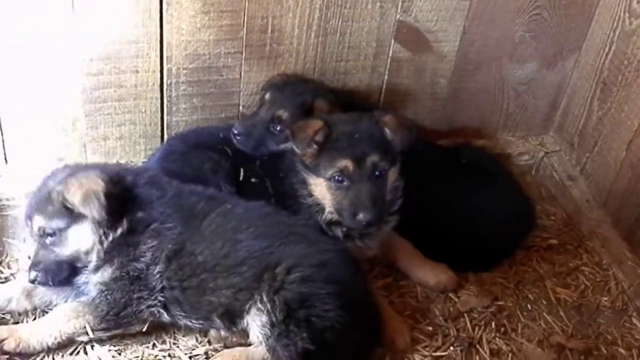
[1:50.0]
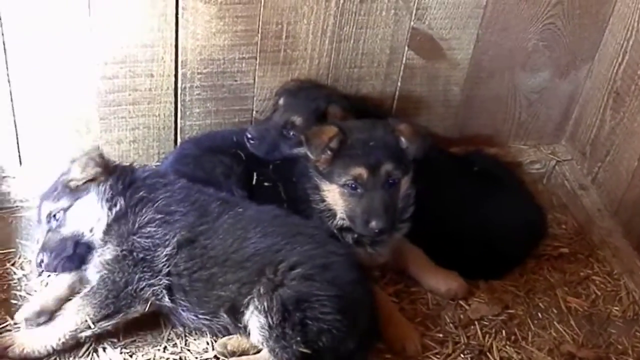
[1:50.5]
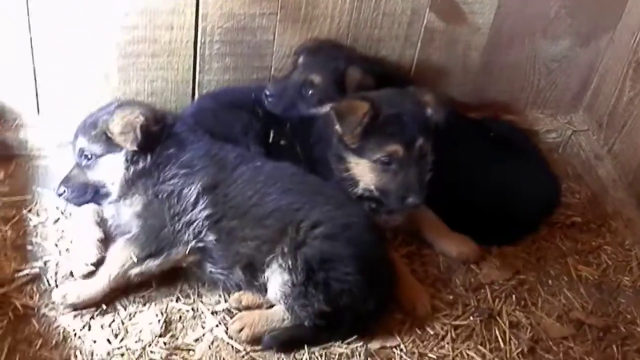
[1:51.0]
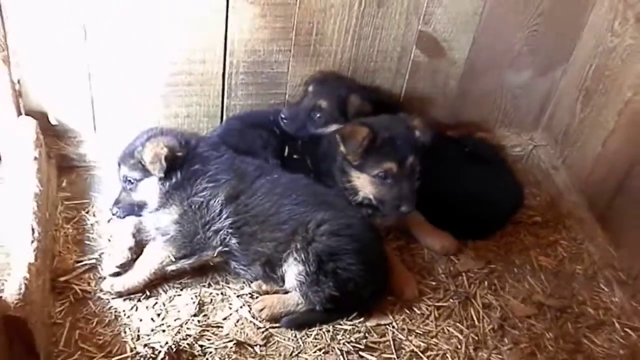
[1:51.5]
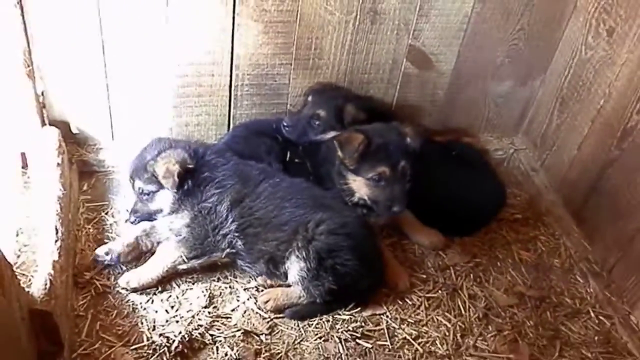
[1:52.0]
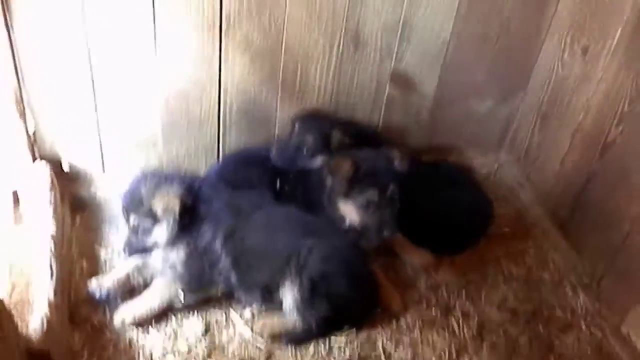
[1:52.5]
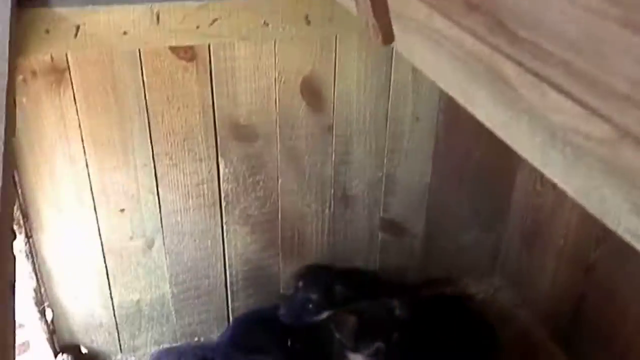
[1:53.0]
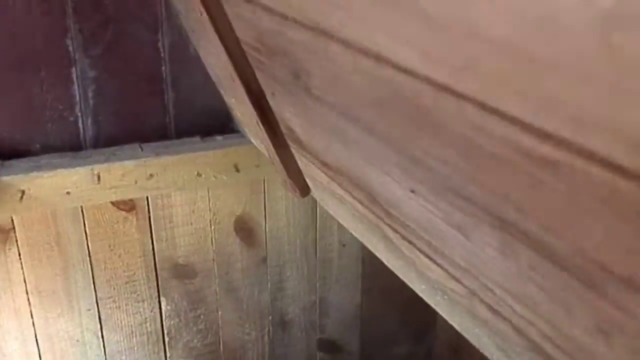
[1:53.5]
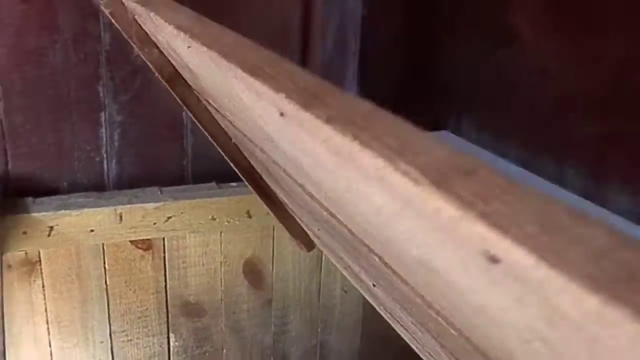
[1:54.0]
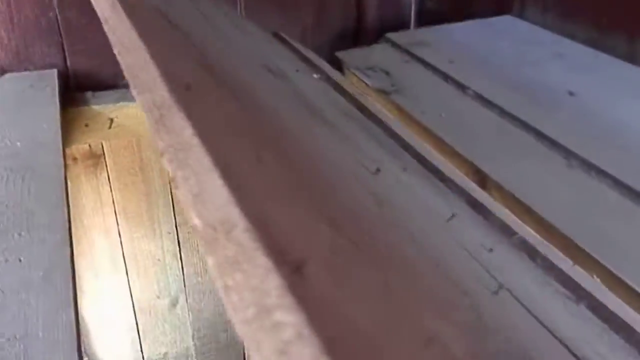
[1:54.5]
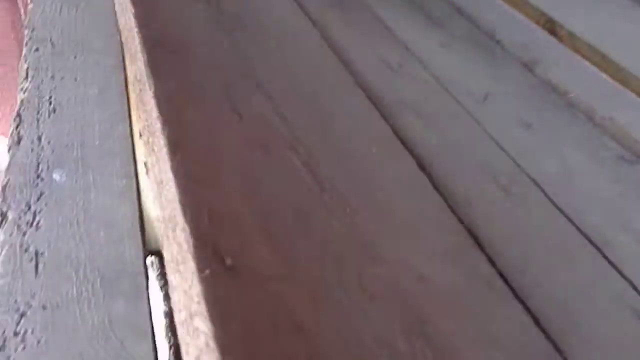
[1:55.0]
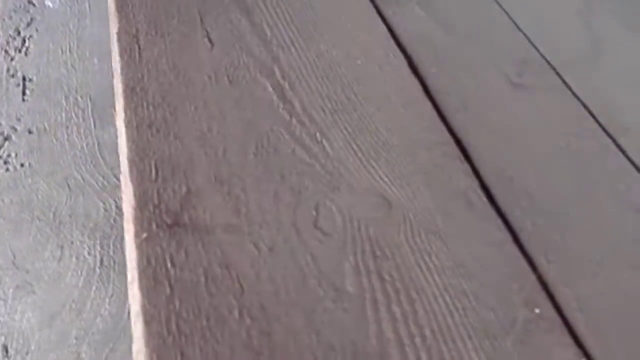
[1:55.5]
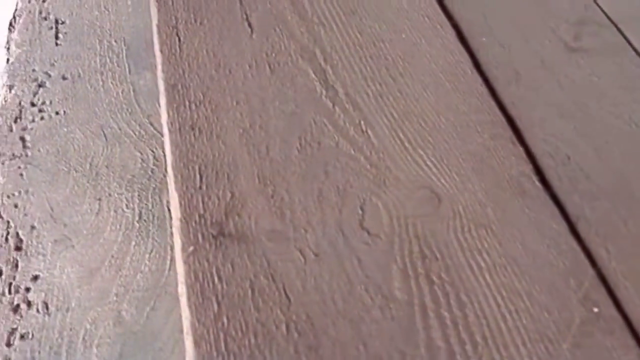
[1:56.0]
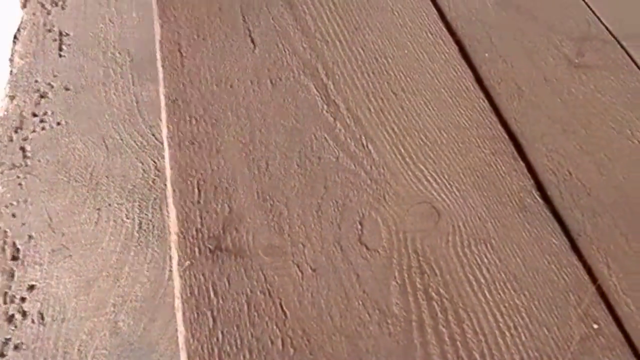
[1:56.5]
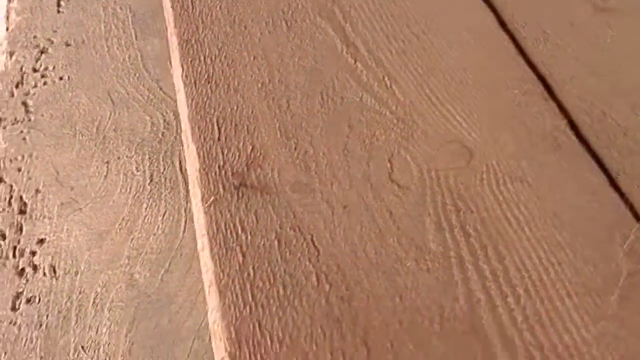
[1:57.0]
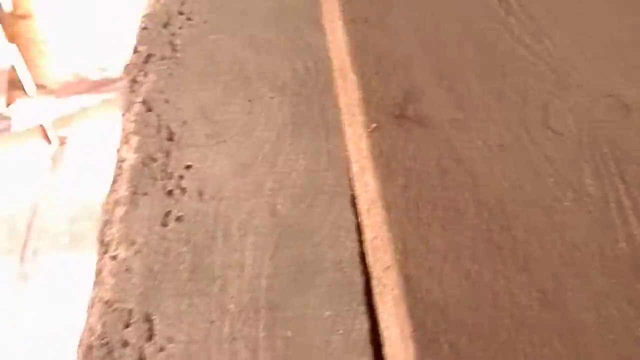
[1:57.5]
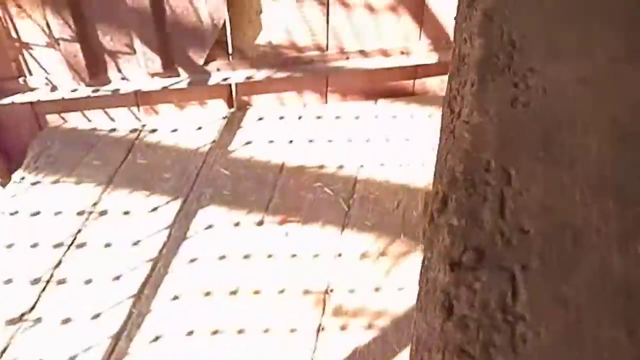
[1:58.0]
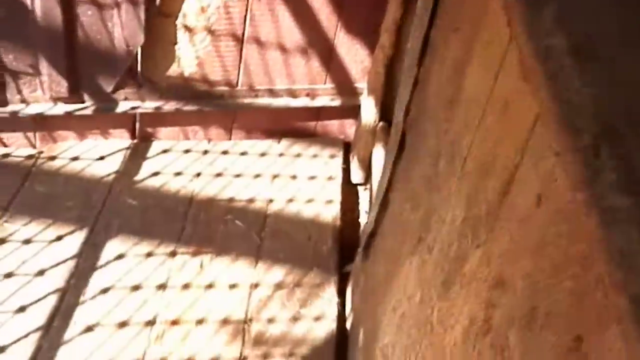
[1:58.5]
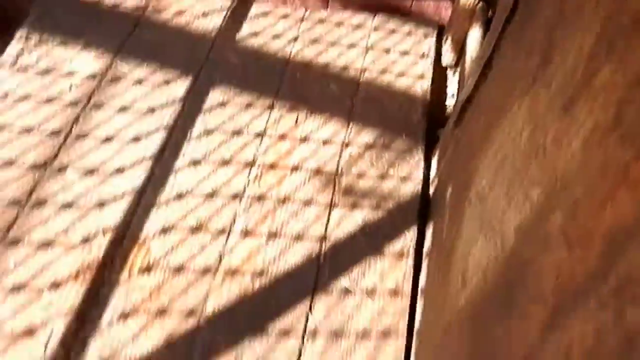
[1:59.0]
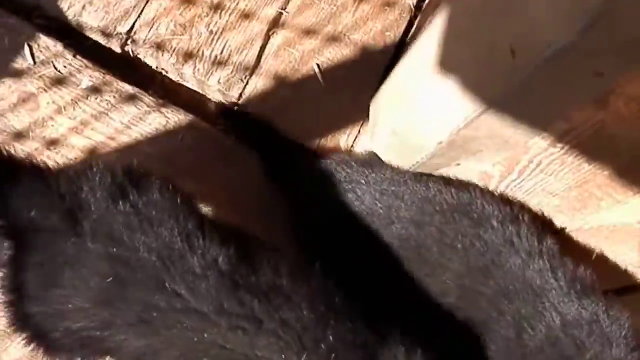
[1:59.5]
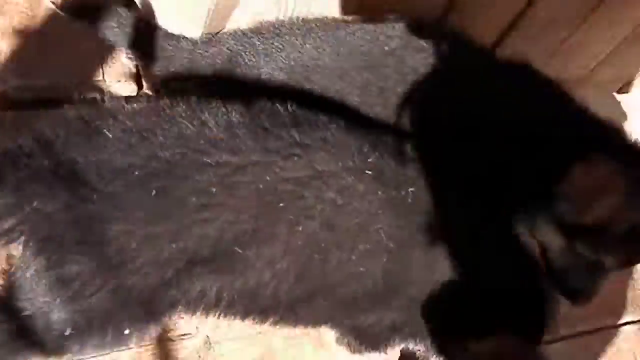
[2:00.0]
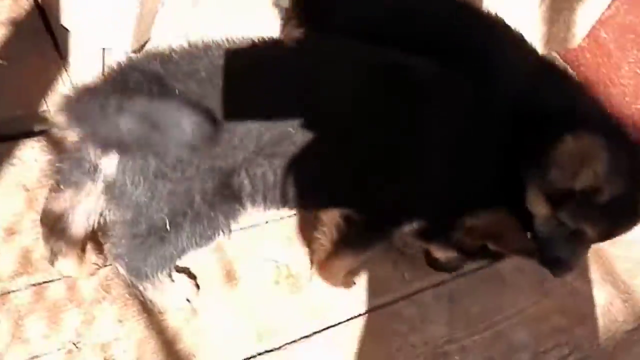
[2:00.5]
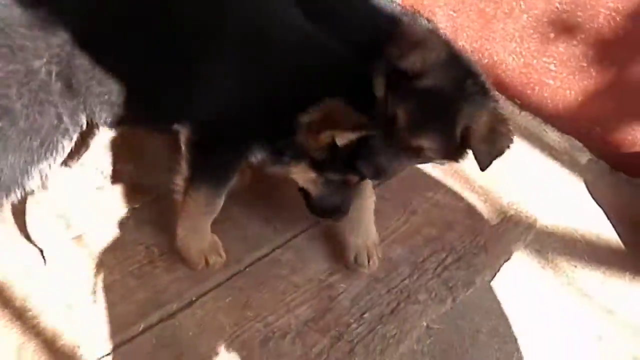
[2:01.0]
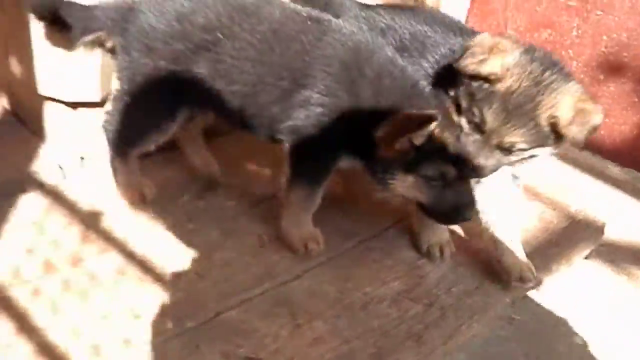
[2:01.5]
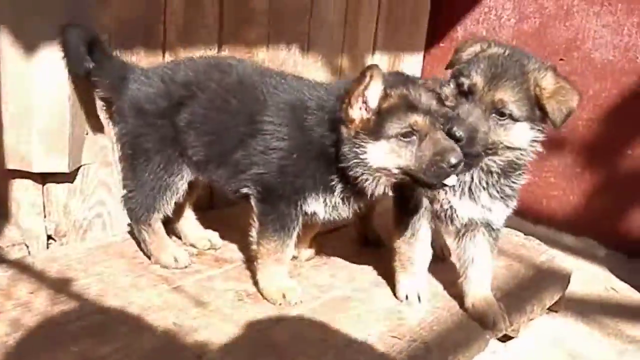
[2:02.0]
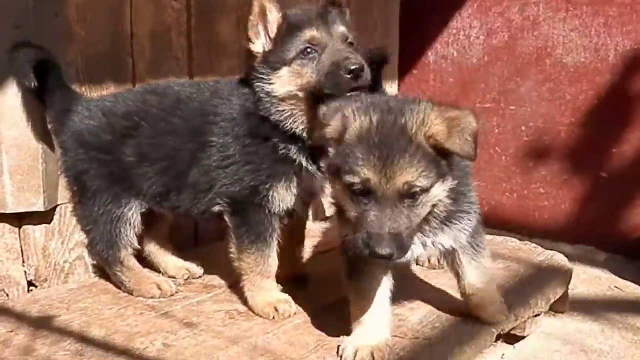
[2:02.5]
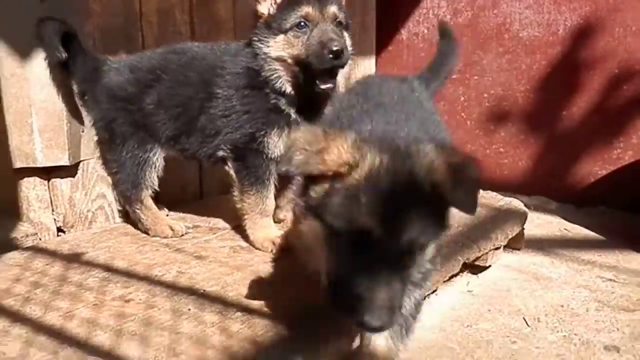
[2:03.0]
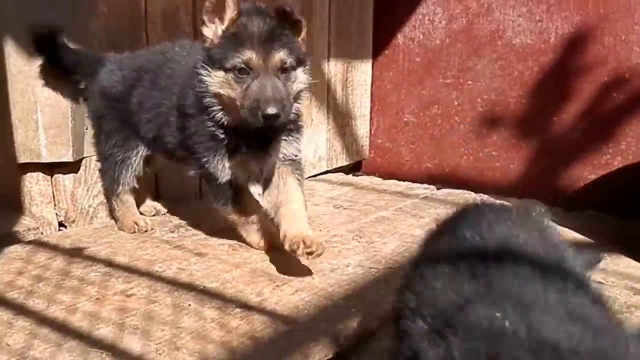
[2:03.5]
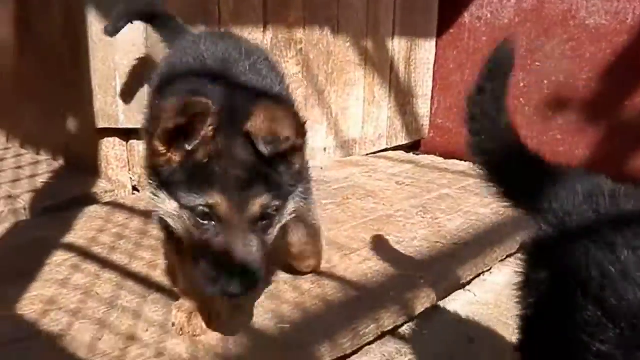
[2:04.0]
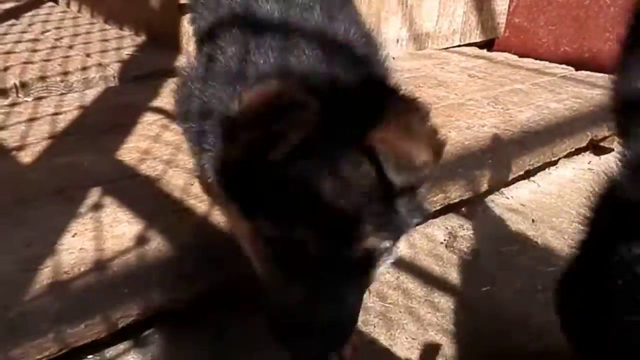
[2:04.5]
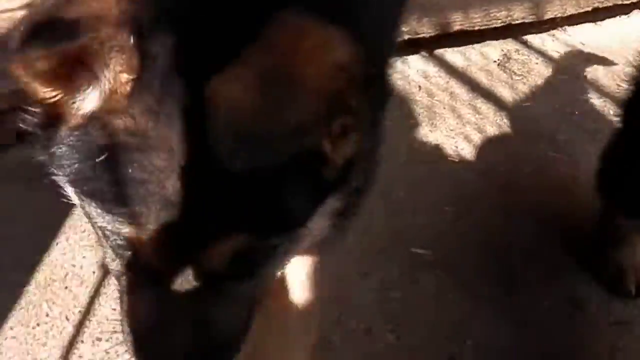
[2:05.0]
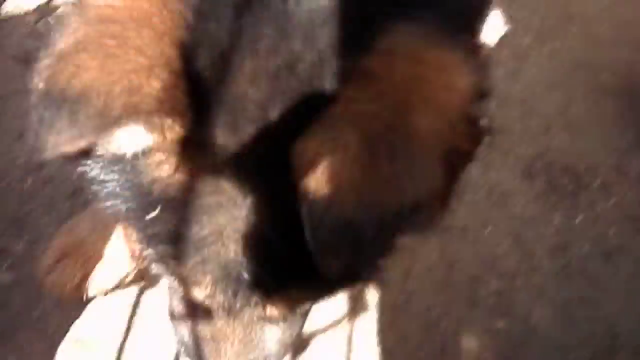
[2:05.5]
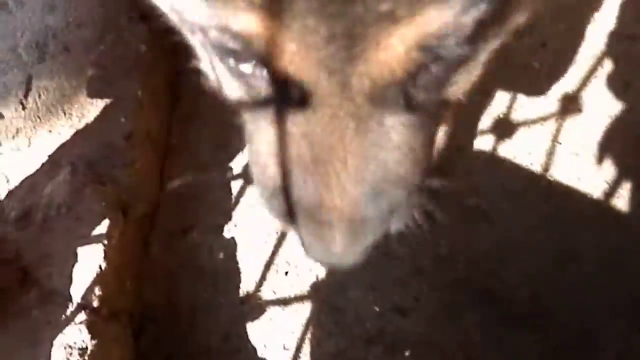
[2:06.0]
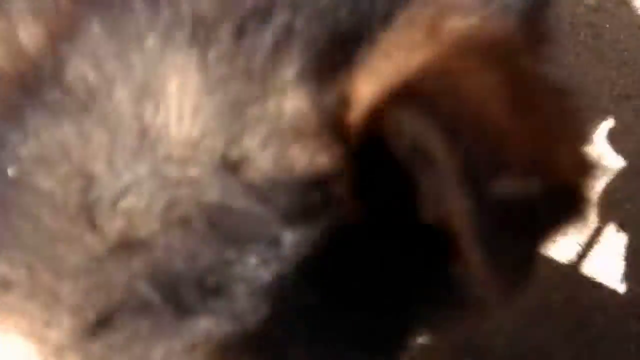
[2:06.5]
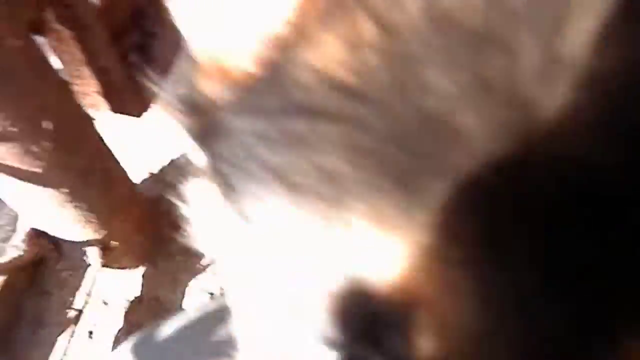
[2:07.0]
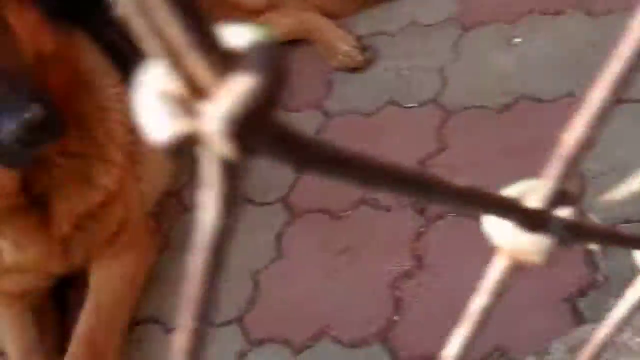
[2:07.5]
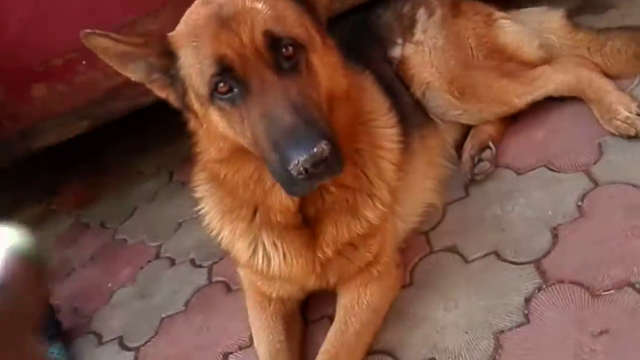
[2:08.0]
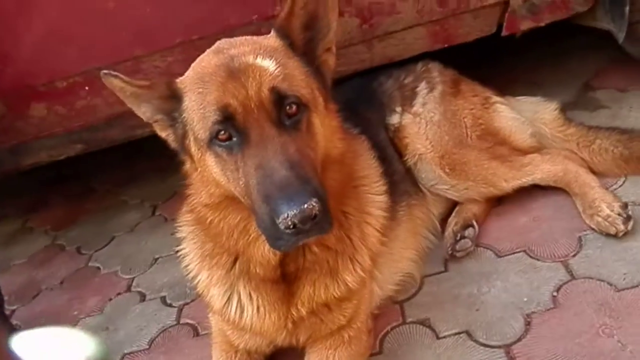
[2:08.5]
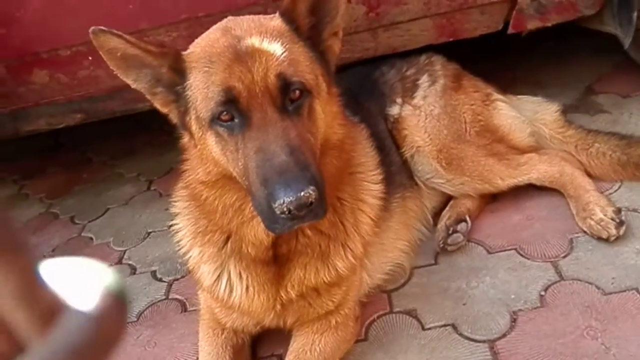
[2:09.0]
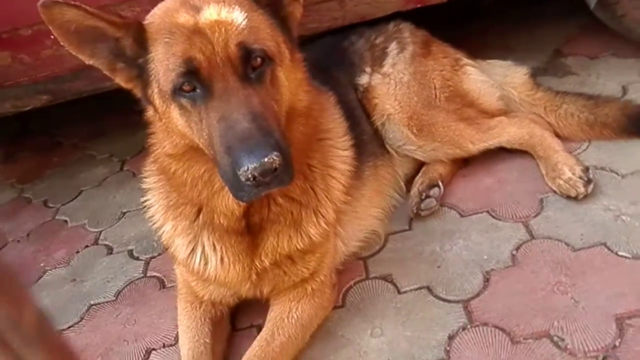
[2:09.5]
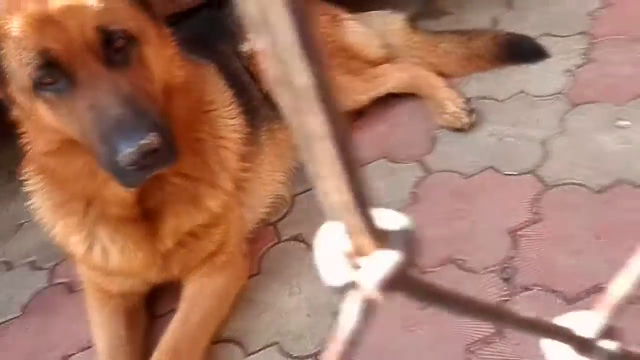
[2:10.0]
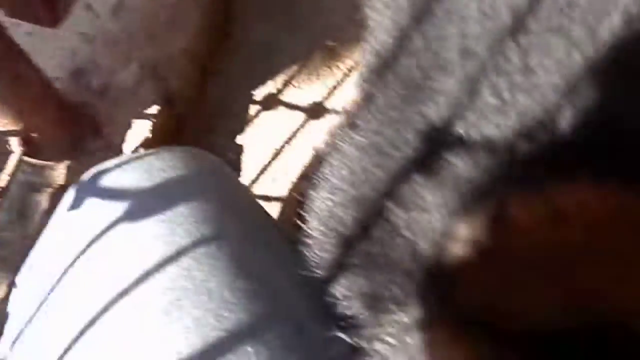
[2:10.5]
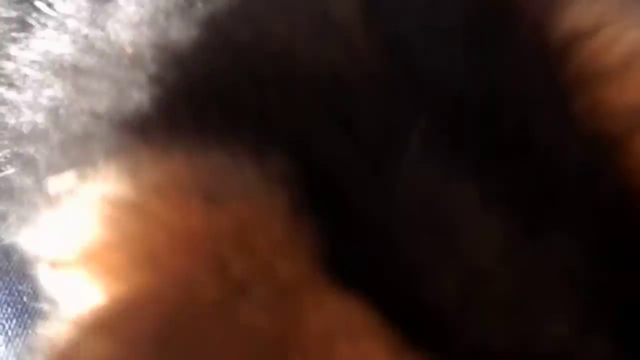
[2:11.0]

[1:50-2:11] There are three puppies in the trunk. After looking at them, the person does nothing to them and closes the wooden trunk. The person then seems to move toward the other dogs that are playing, but a dog also goes next to the wooden trunk to play, following the person who opened it. The view then shows the same dog that was lying outside the yard, still lying outside. In that part, a person's leg is visible there, and the gate seems to be open.